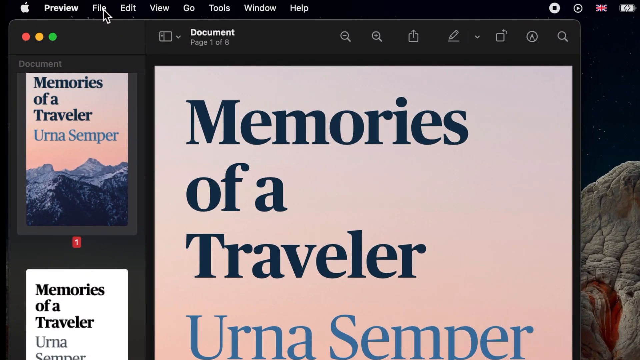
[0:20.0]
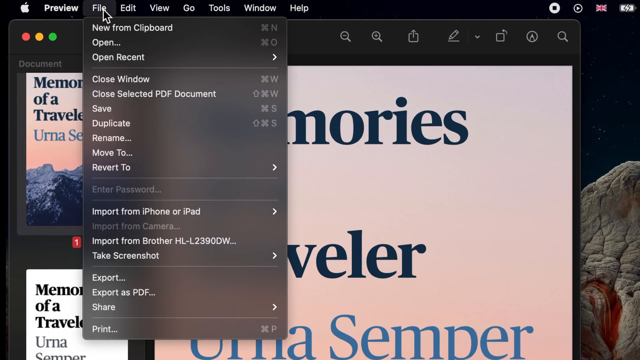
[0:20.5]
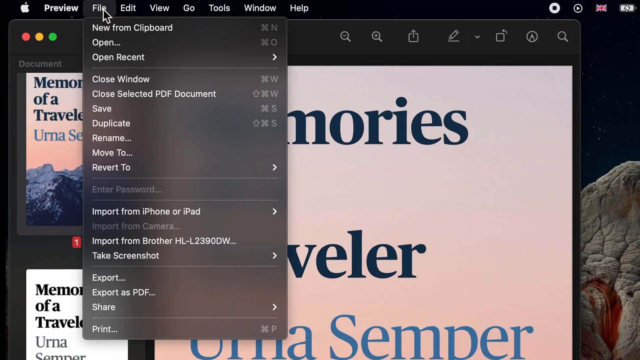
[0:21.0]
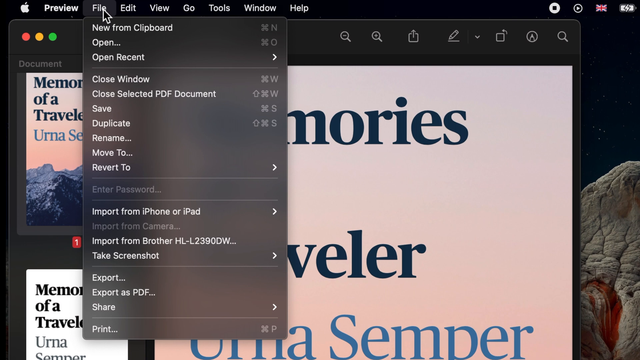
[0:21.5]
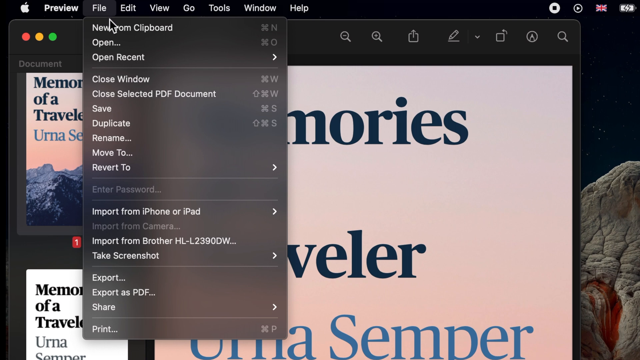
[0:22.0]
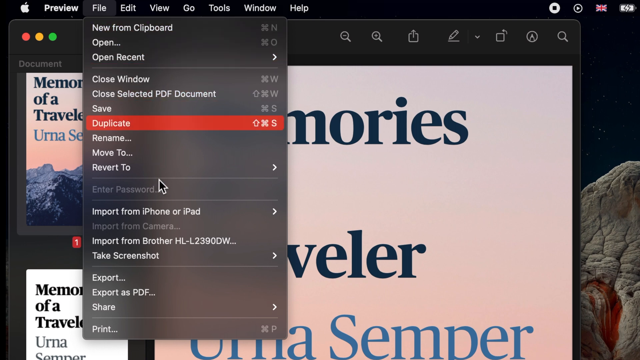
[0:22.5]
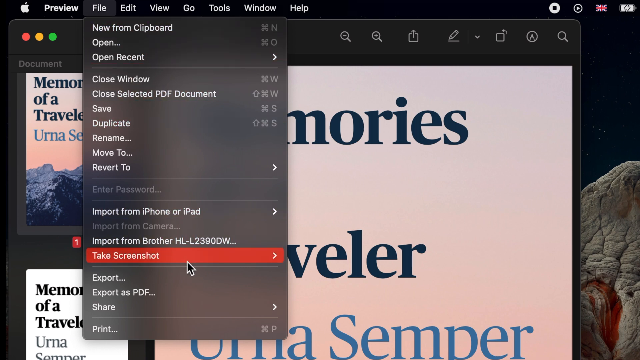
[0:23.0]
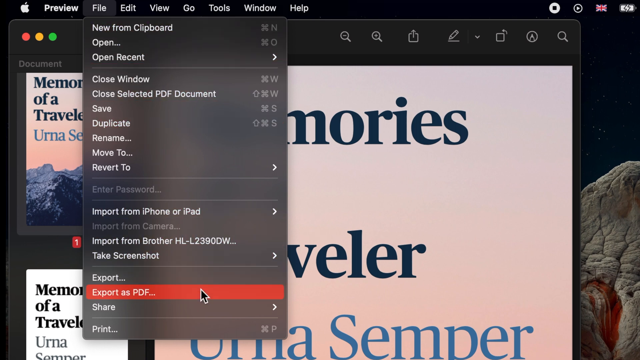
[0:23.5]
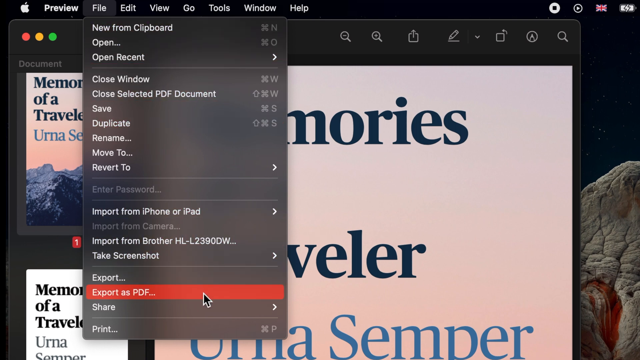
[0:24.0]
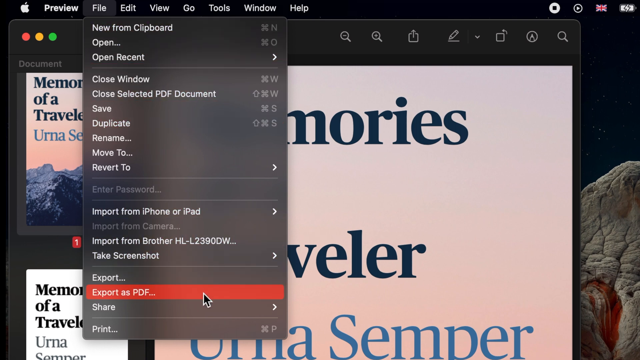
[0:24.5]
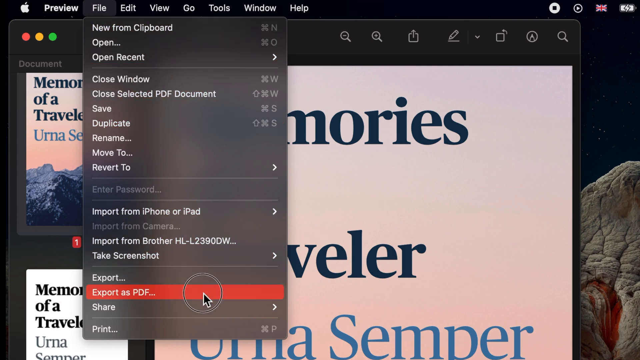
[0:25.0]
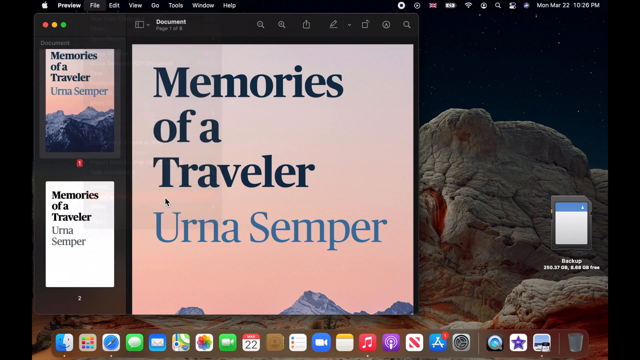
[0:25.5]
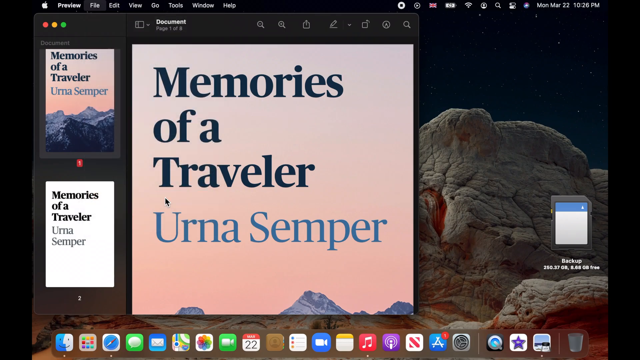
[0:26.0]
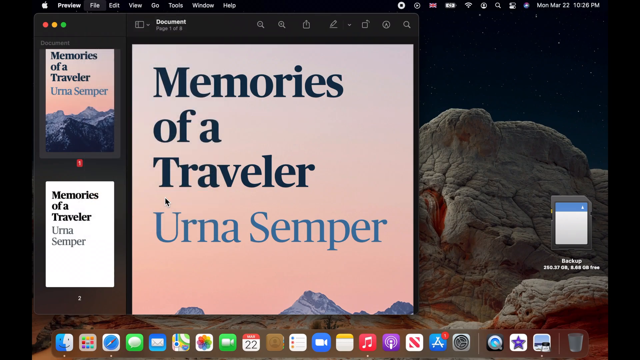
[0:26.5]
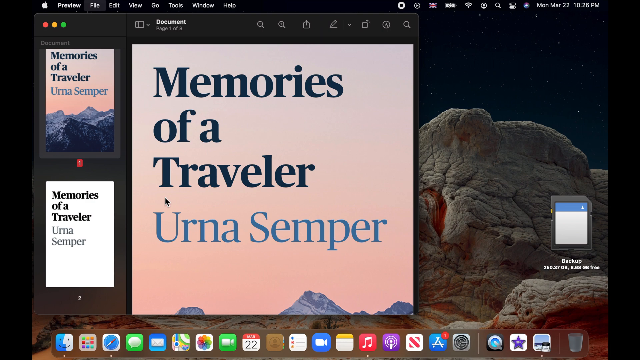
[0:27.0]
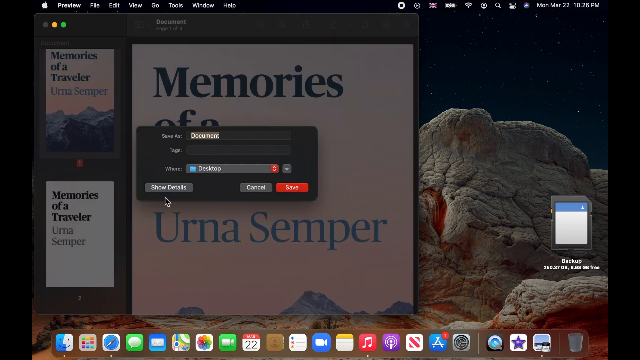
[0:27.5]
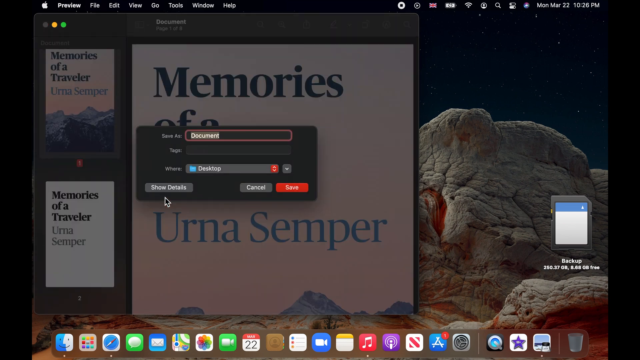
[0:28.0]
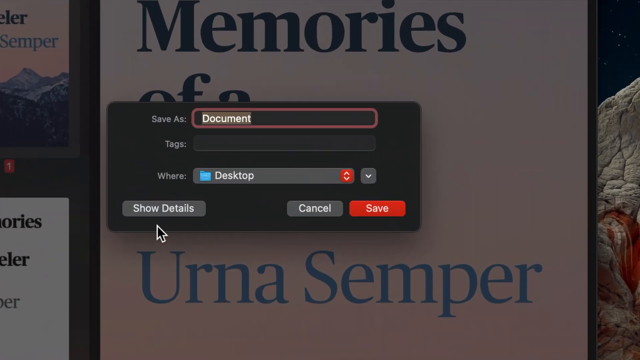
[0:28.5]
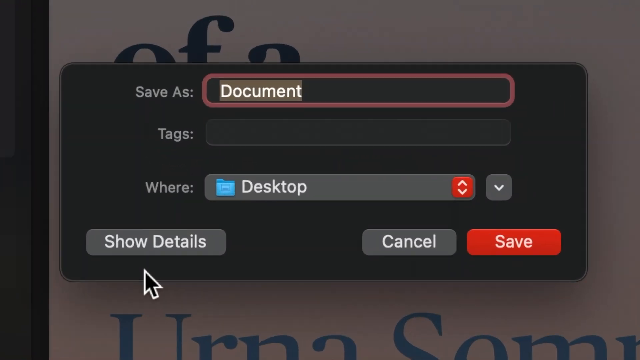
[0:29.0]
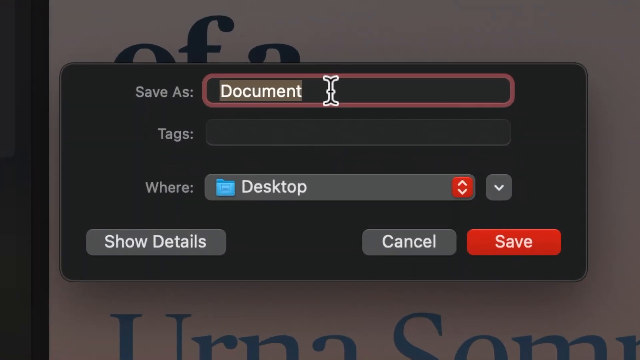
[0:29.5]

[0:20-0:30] An open PDF document reads "Memories of a Traveller, Erna Semper". Its cover has a picture of mountains with a pinkish-toned backdrop. The status bar at the top shows page 1 of 8. The program is open on a Mac desktop, and there is a British flag in the top right corner. The cursor hovers over the "File" option of the program and clicks it, bringing down a drop-down menu with many options. The cursor moves down to "export as PDF" and clicks it. Another popup with a dark background appears. Its first option is "save as", a fillable field currently containing "document", which is highlighted and also has a red outline. Underneath is "tags", with an empty field, and below that is "where", with "desktop" currently selected and a down arrow next to it to change the option. Near the bottom are buttons reading "show details", "cancel" and "save". The cursor hovers over "show details", then moves to the "save as" field and selects it.